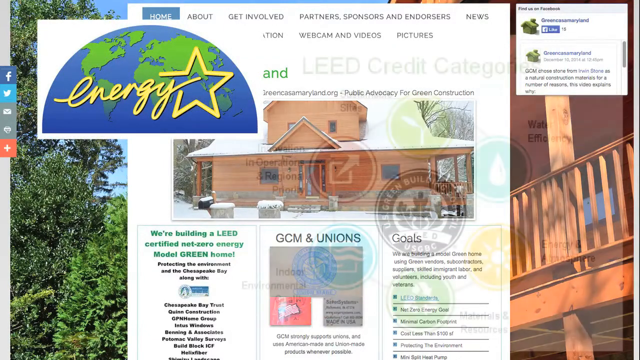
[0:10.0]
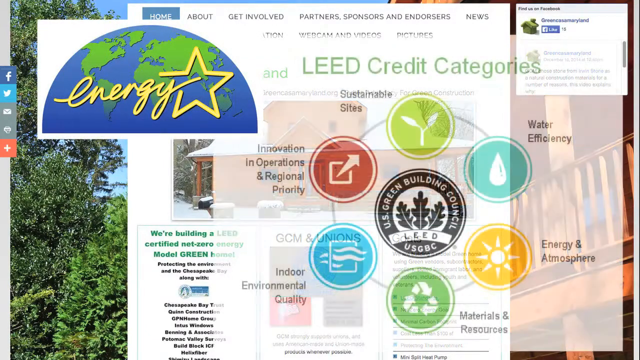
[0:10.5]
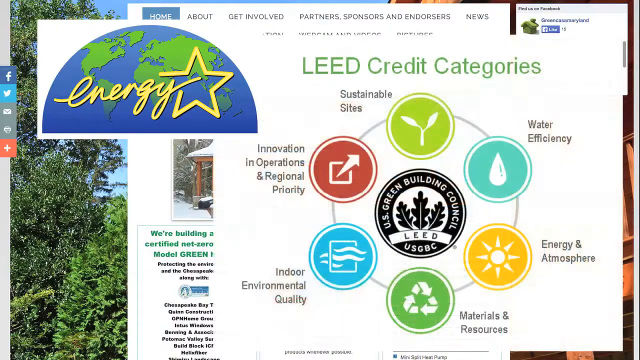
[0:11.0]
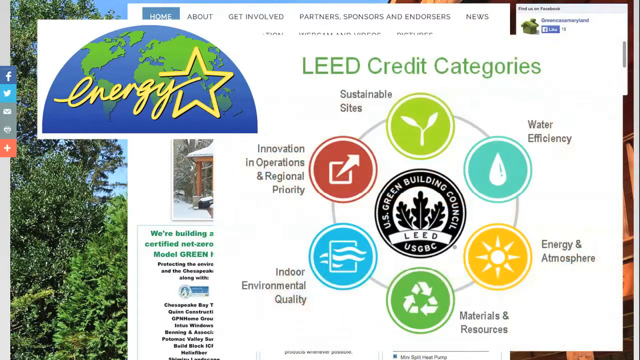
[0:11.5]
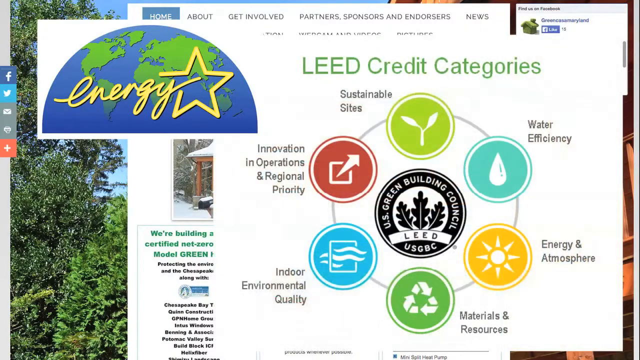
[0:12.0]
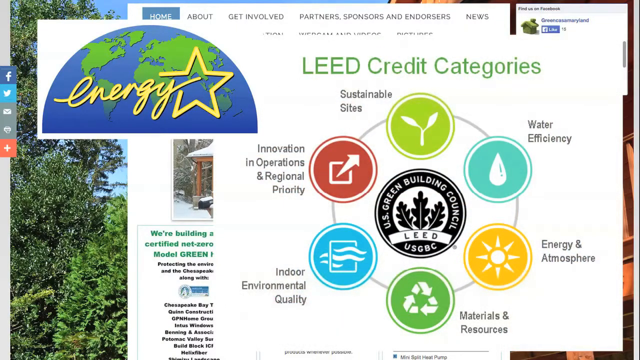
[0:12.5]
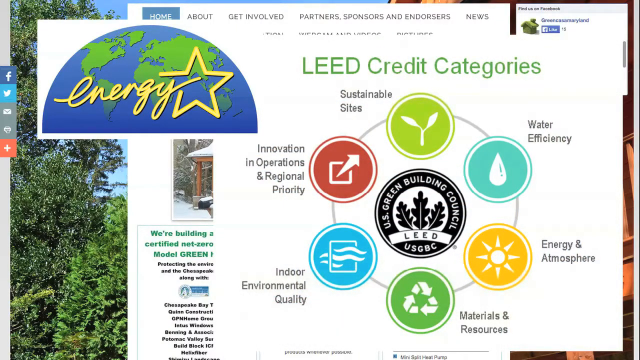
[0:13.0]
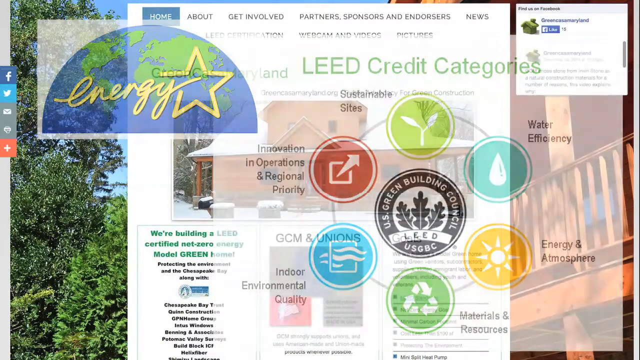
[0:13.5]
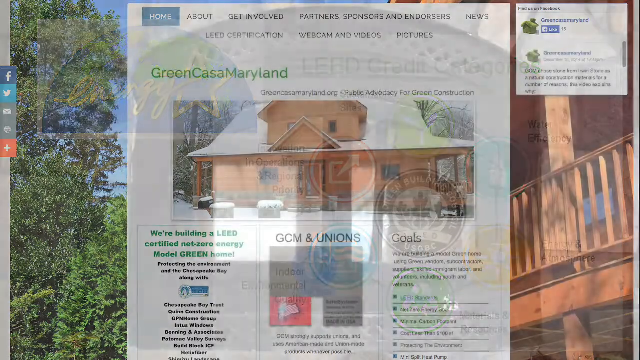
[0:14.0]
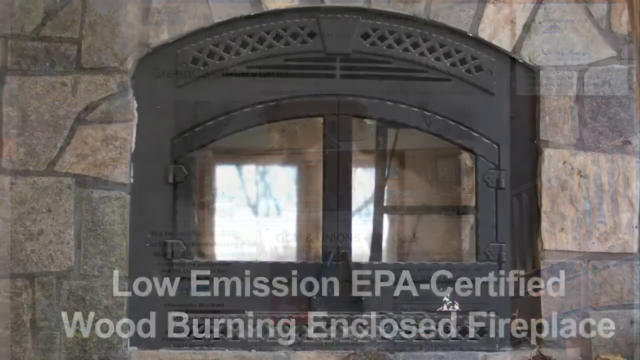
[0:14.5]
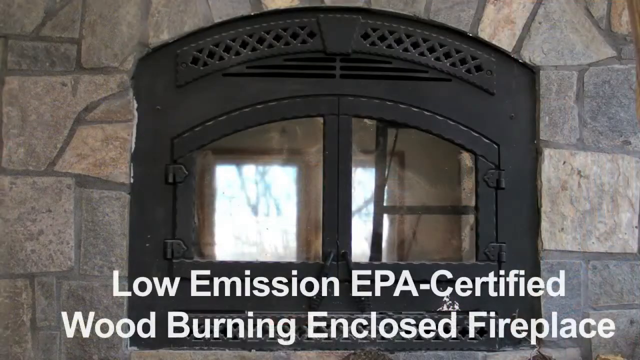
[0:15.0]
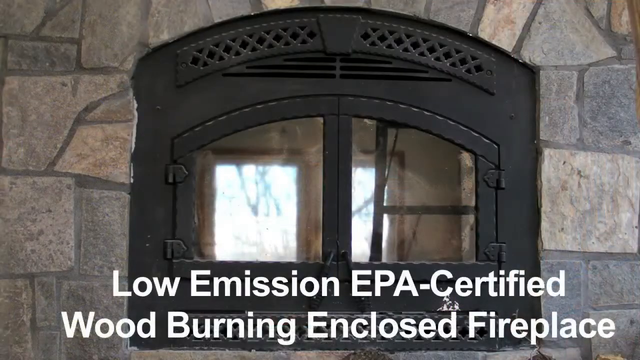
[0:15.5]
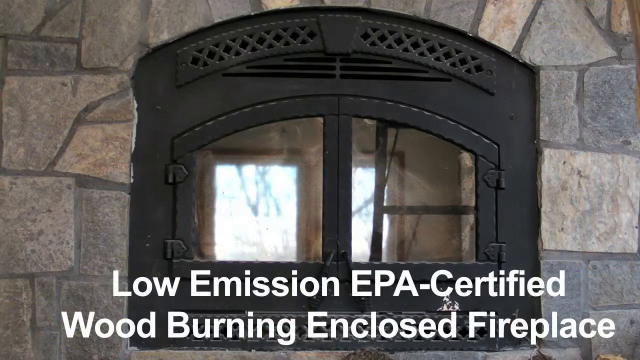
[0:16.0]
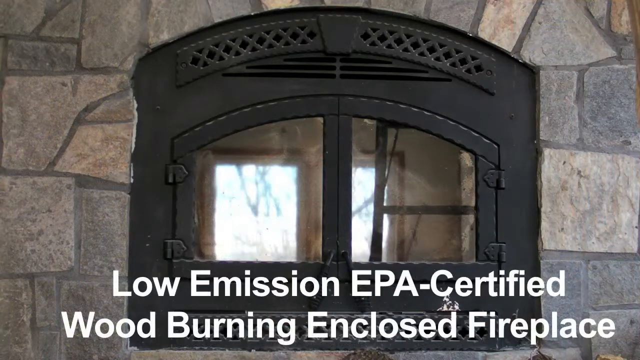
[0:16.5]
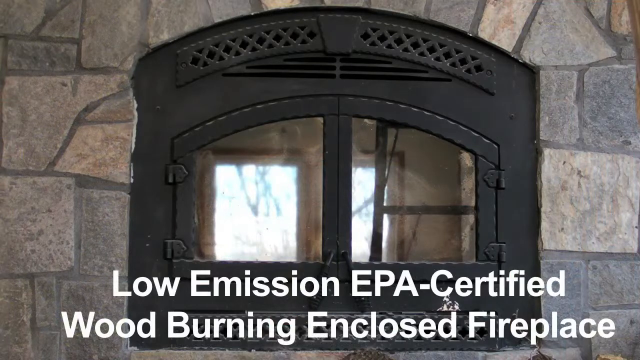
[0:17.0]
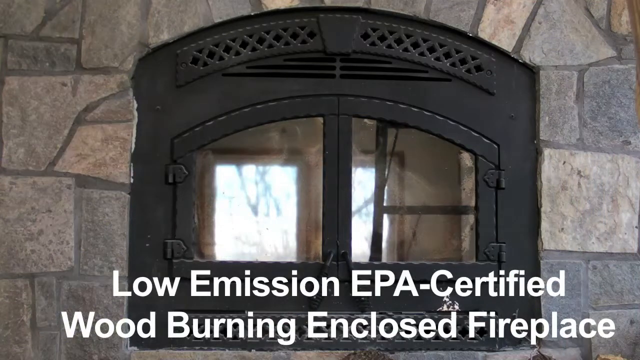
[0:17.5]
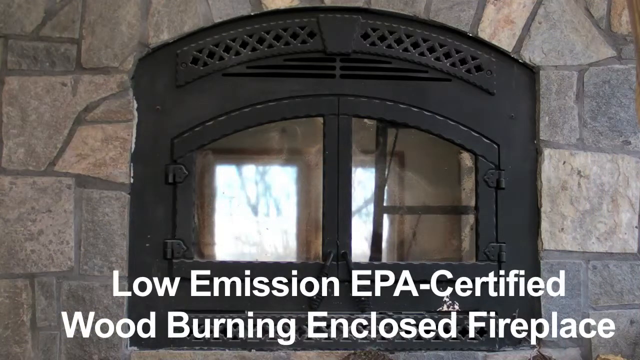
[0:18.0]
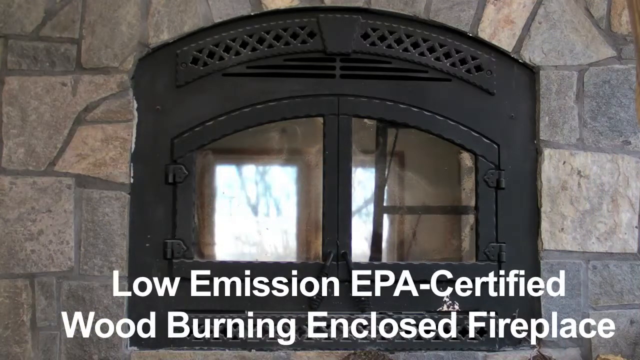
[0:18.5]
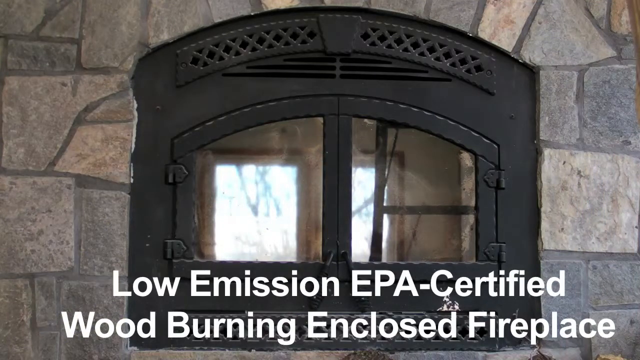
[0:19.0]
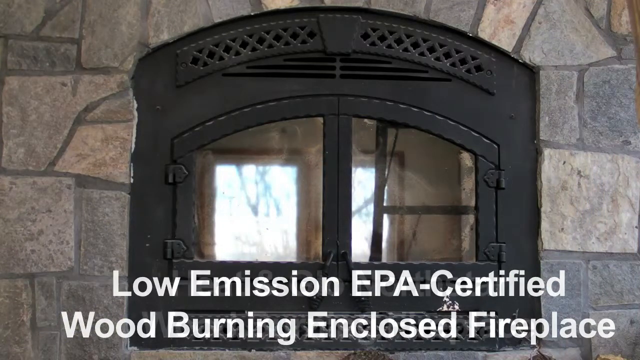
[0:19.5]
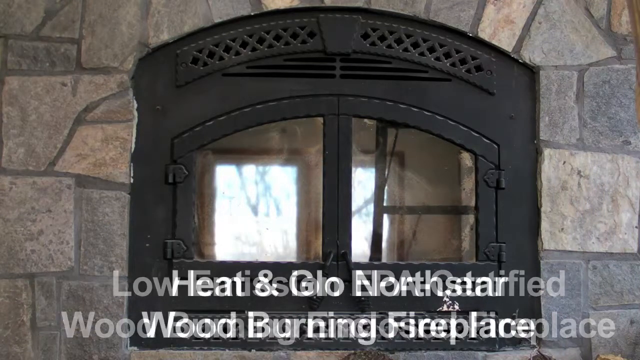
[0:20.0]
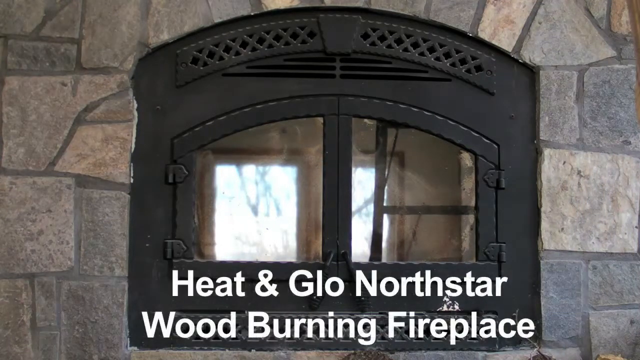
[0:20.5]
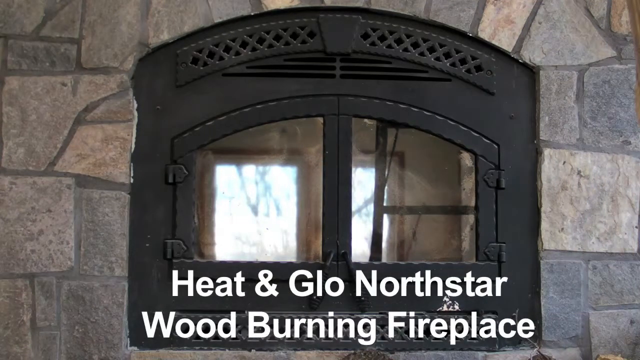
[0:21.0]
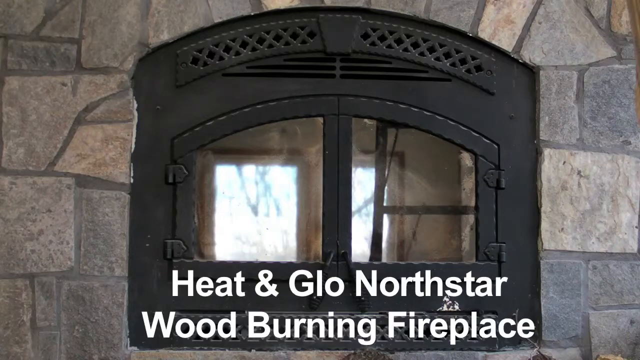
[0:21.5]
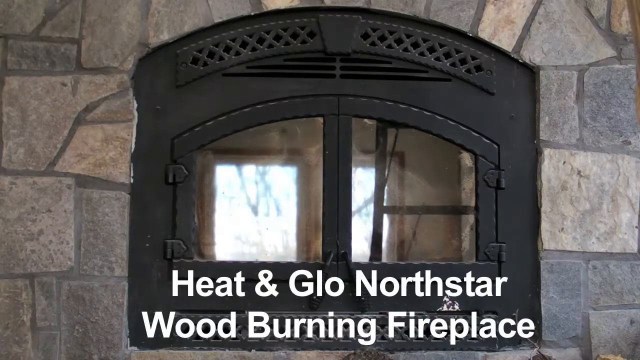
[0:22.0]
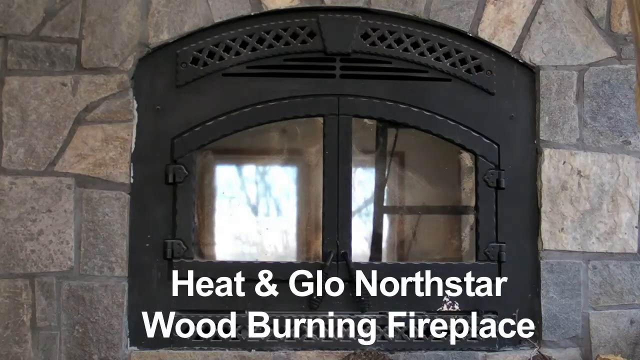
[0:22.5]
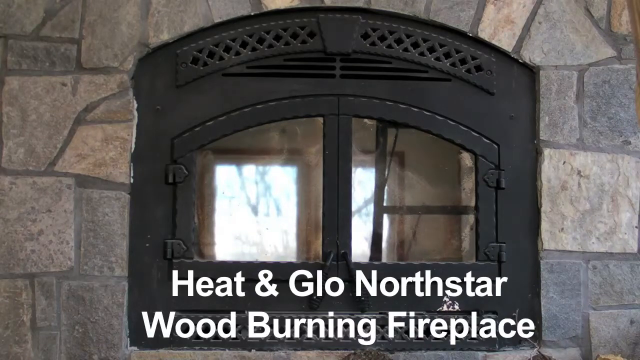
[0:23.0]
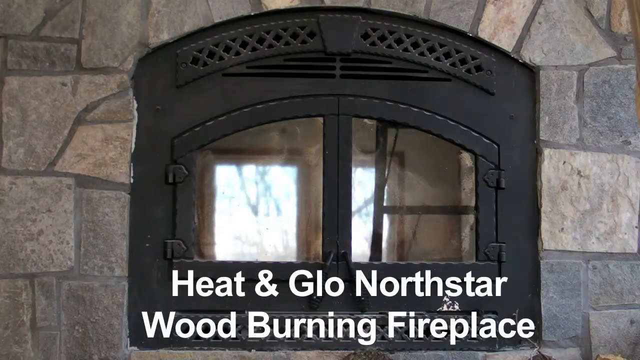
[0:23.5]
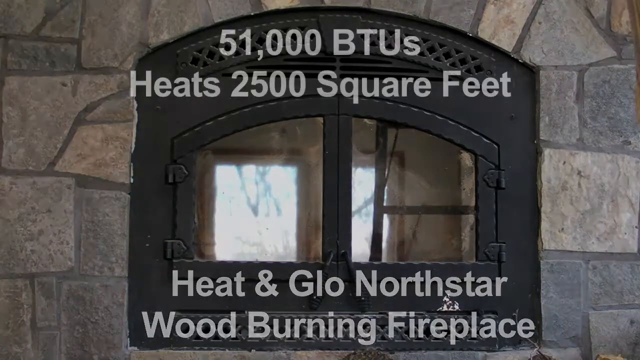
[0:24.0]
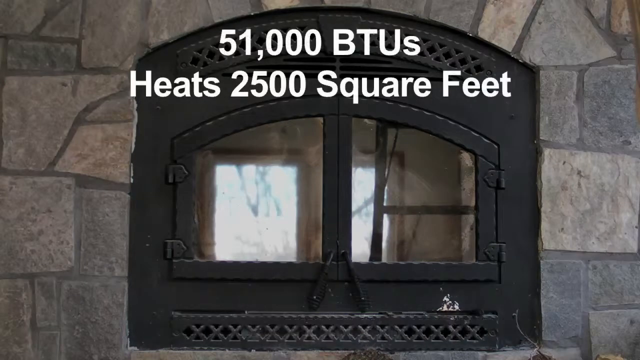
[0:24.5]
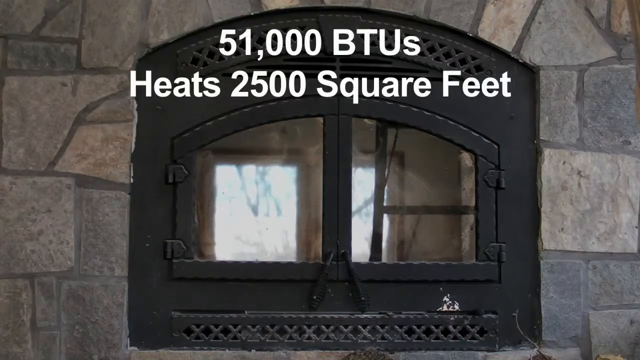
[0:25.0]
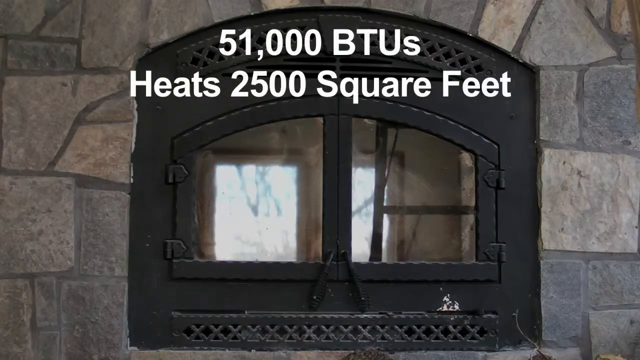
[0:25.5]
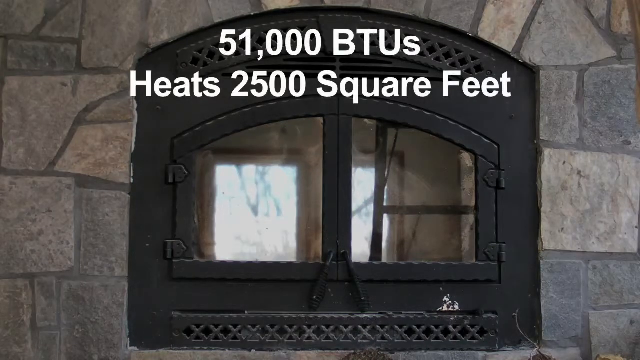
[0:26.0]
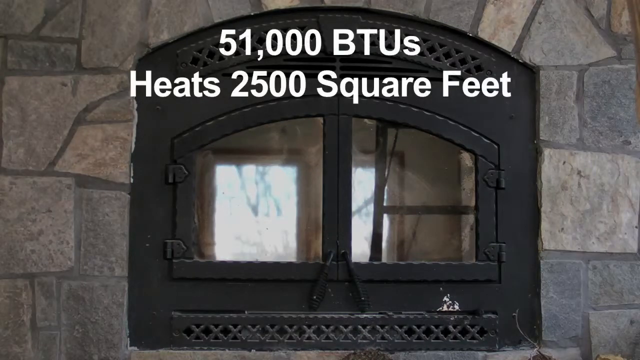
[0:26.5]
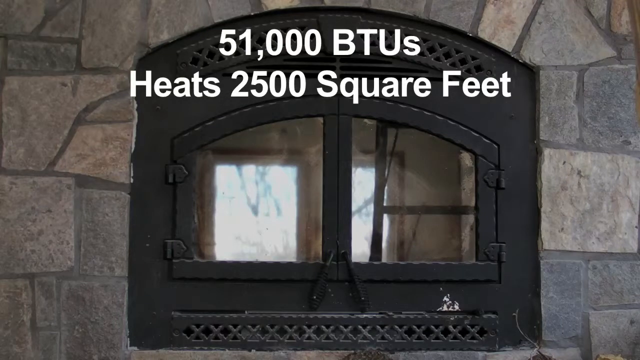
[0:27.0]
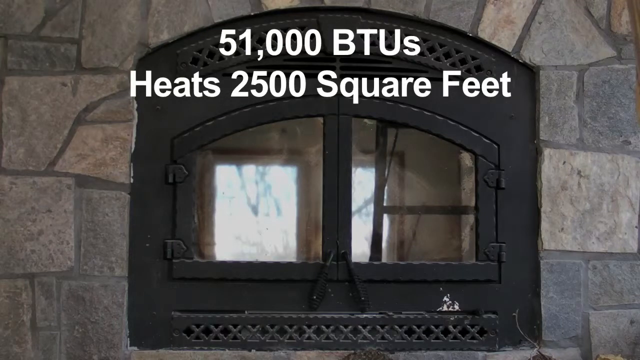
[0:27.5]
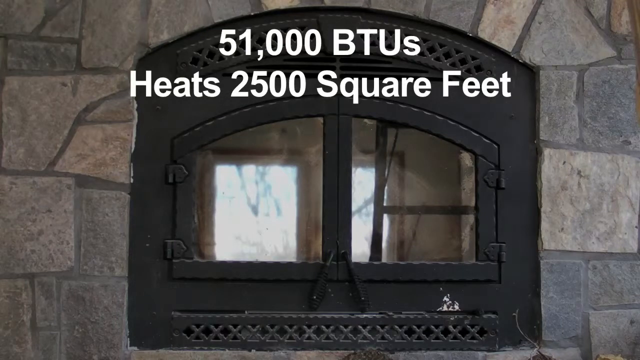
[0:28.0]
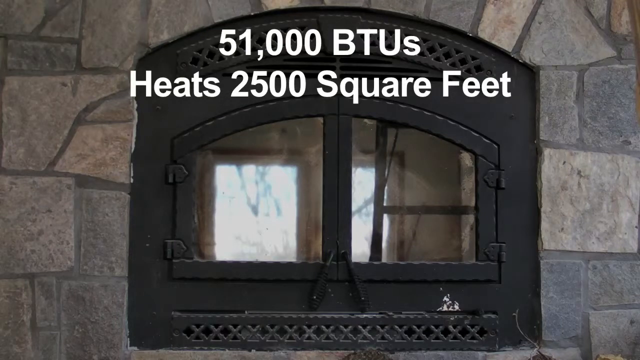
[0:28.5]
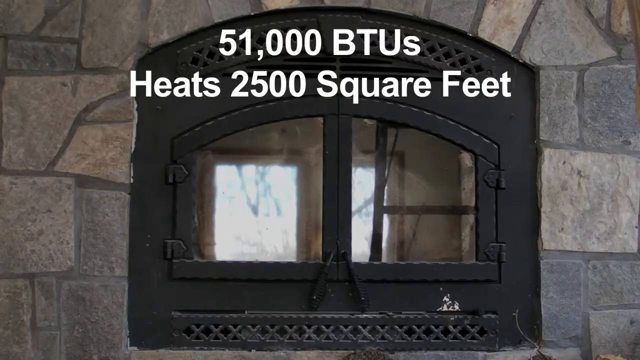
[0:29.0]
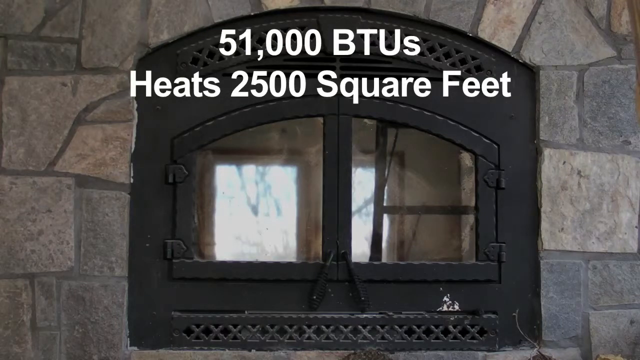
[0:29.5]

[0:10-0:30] The same website is still shown, now with a section on lead credit categories: sustainable sites, water efficiency, energy and atmosphere, environmental quality, innovations in operations, and regional priority. The site also shows low-emission EPA certified wood-burning and closed fireplaces, as well as heat and glow non-star wood-burning fireplaces, with figures of 51,000 BTUs and 2,500 square feet.